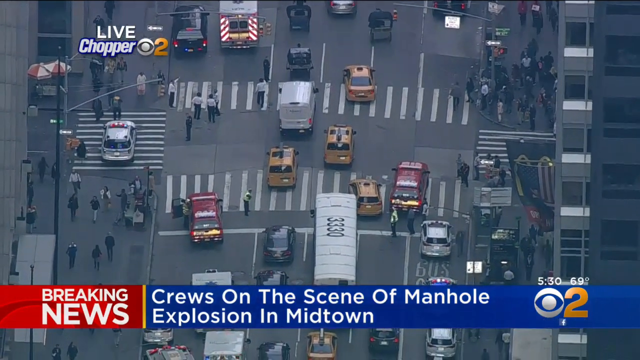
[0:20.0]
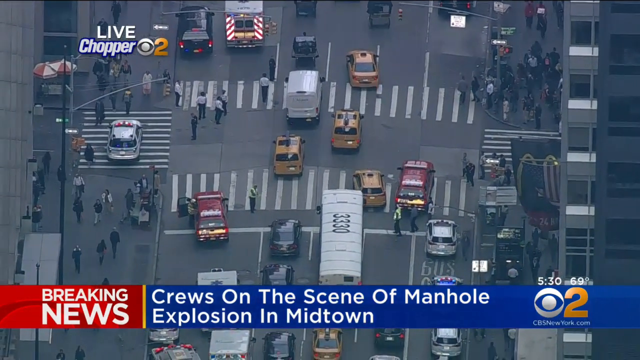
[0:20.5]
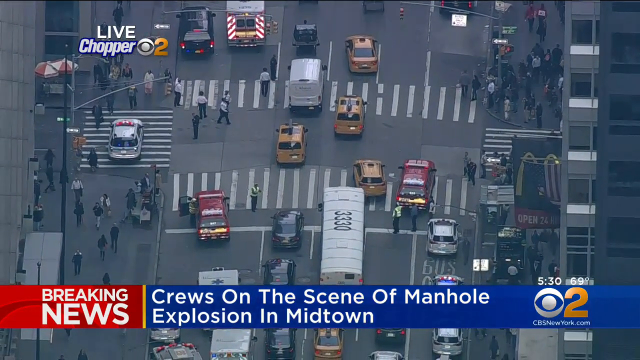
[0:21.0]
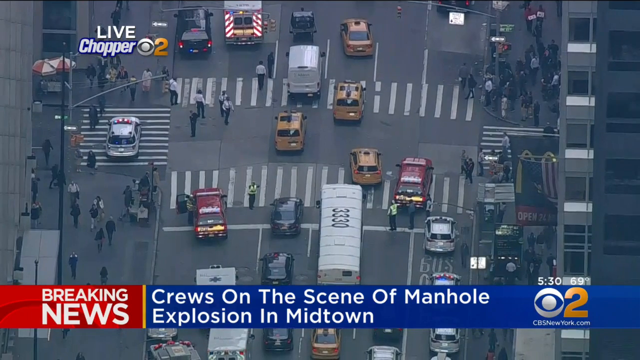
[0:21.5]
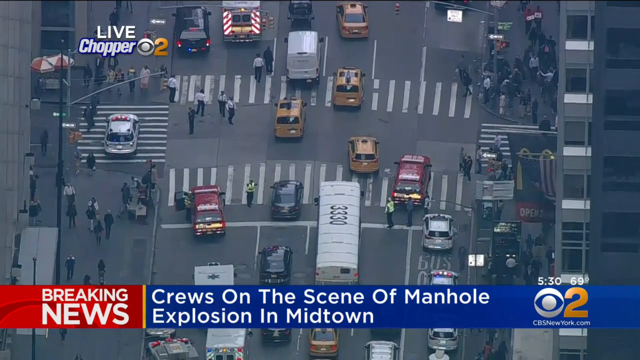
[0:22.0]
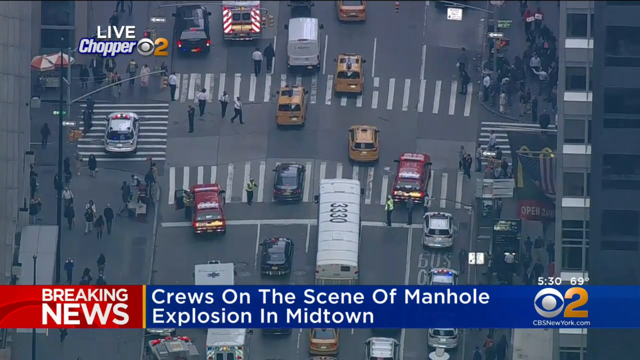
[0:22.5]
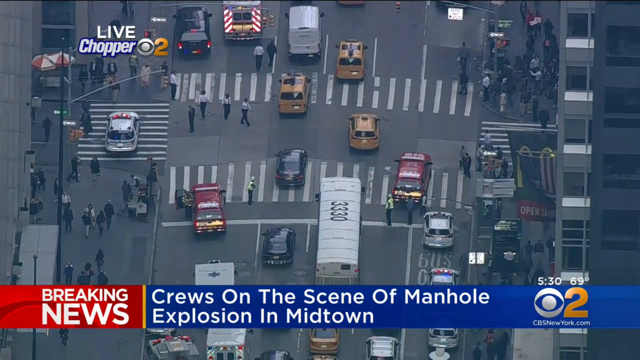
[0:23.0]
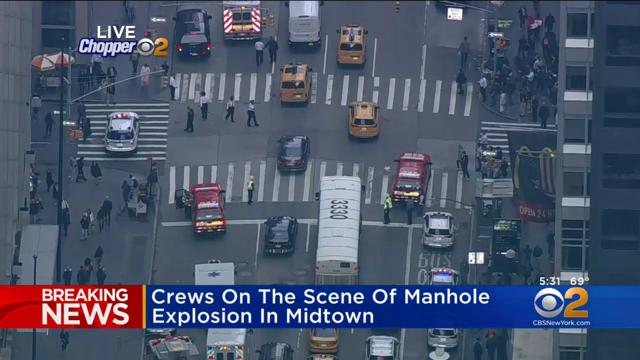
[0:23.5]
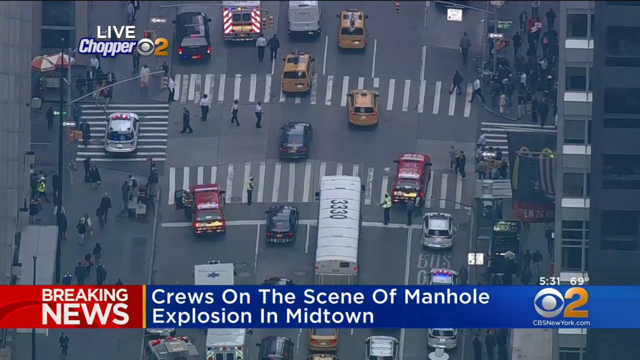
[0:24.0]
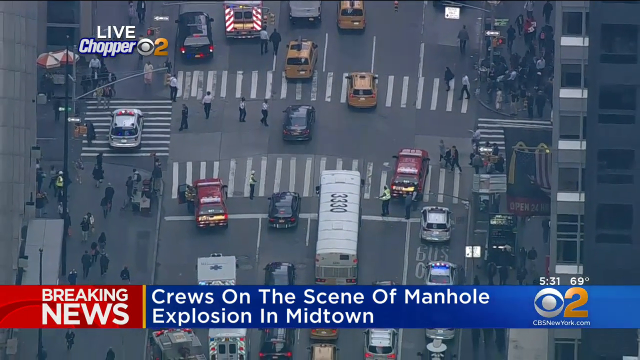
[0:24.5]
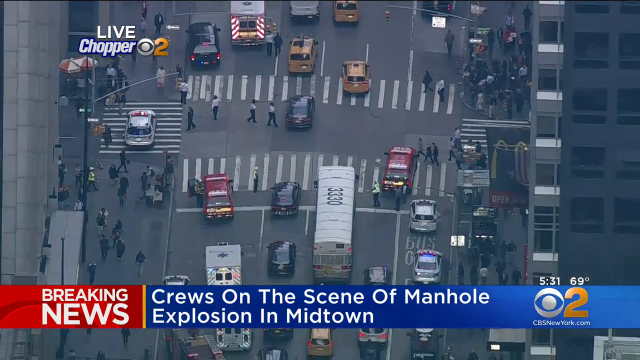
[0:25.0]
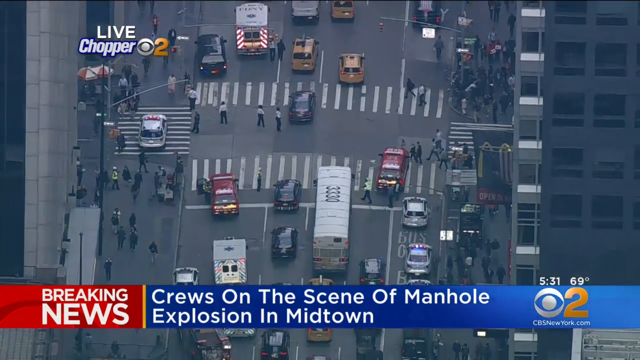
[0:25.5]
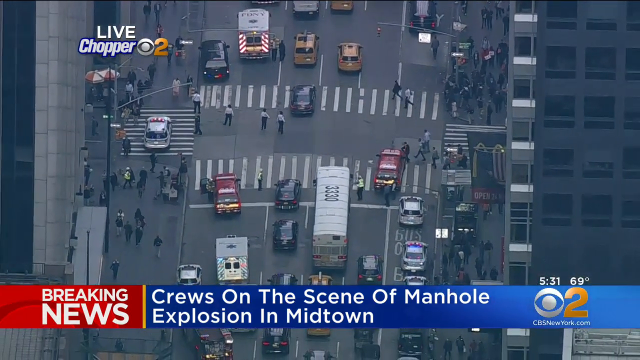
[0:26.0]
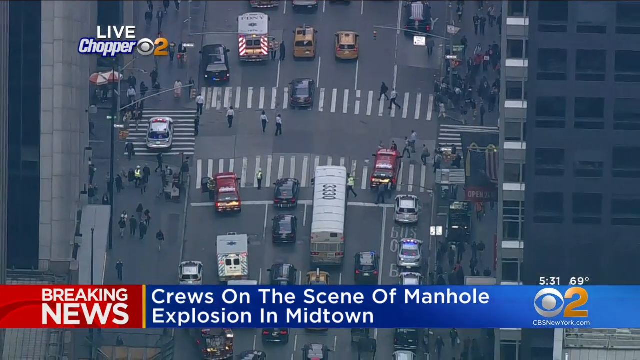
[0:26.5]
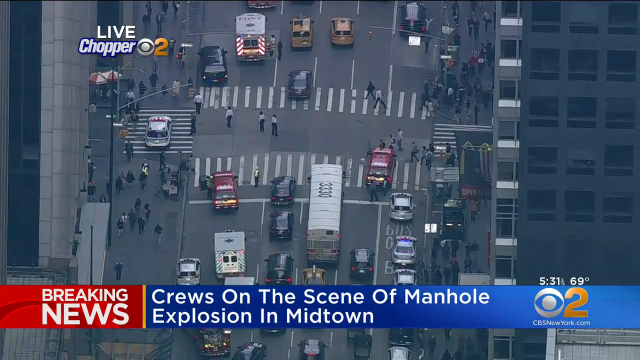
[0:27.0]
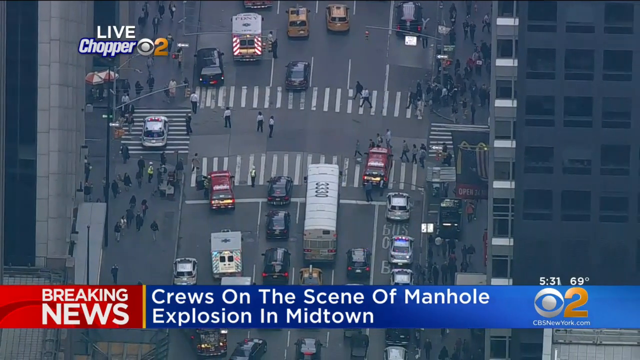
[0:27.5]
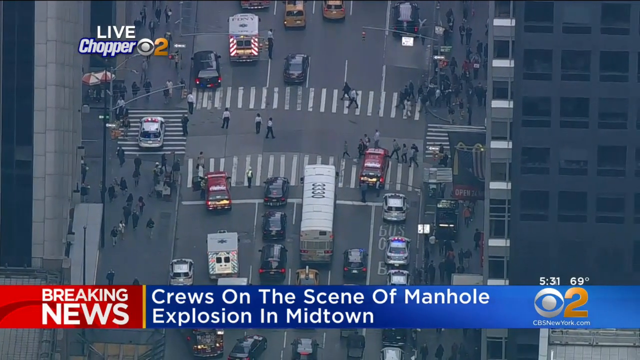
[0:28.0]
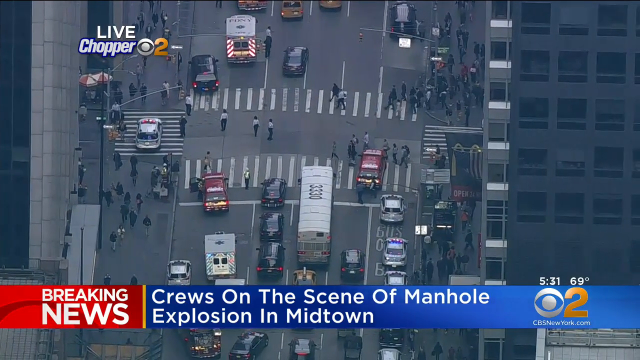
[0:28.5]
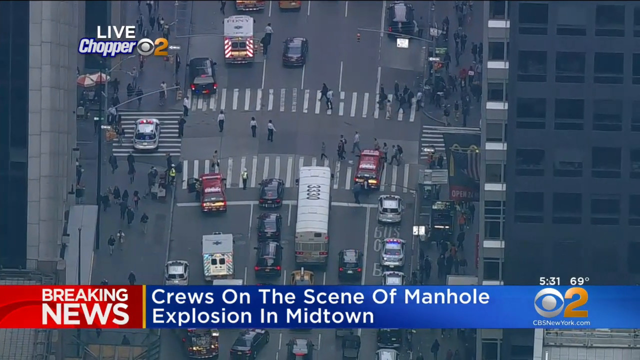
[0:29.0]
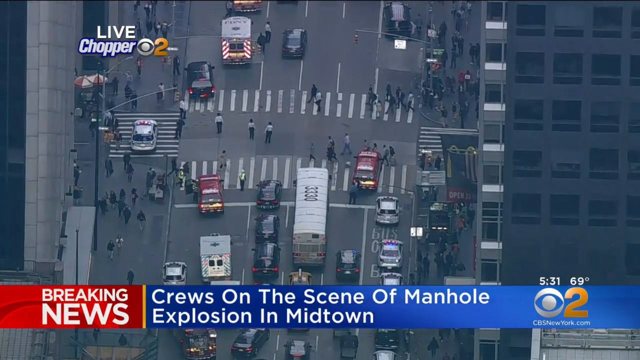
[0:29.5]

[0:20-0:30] Footage shows a busy street in Midtown, New York City, where cars try to pass by as many police officers and emergency first responders try to control the traffic and the pedestrians crossing the street from each side. Many yellow taxis, a large white bus, and many cars drive slowly through the street as the responders help control traffic. It appears to be the site of a major accident; the cars drive cautiously and slowly, and pedestrians on each side cross the crosswalk. The blue and red banner at the bottom of the screen still reads "BREAKING NEWS CREWS ON THE SCENE OF MANHOLE EXPLOSION IN MIDTOWN" with a CBS 2 New York logo.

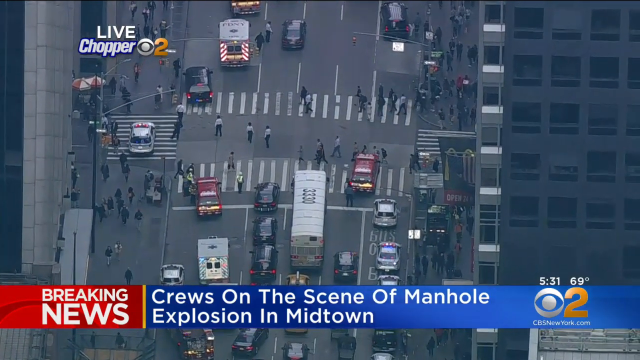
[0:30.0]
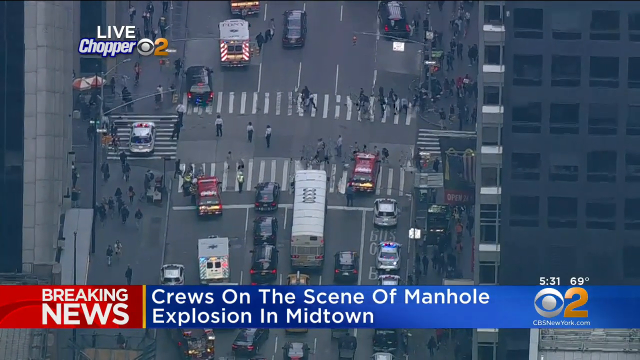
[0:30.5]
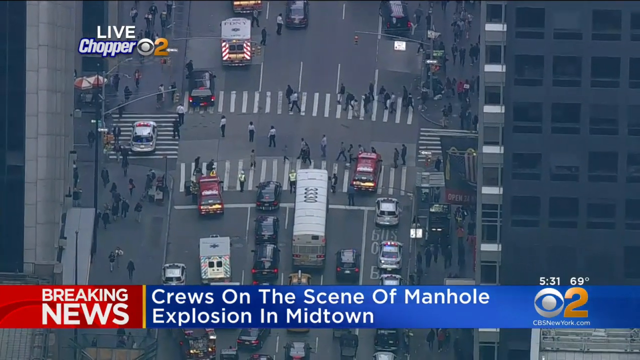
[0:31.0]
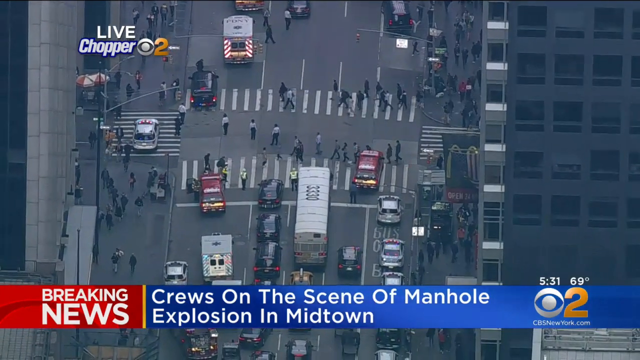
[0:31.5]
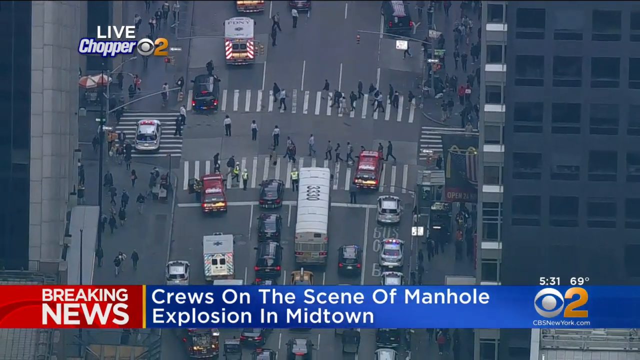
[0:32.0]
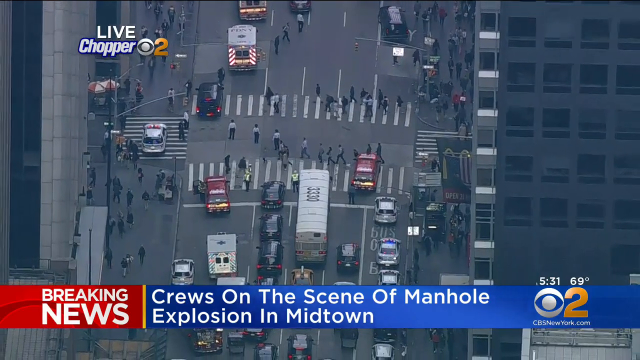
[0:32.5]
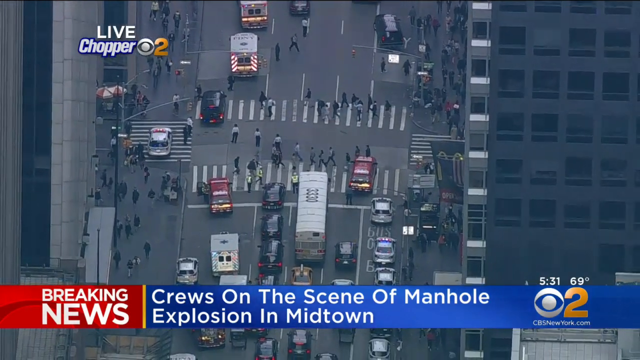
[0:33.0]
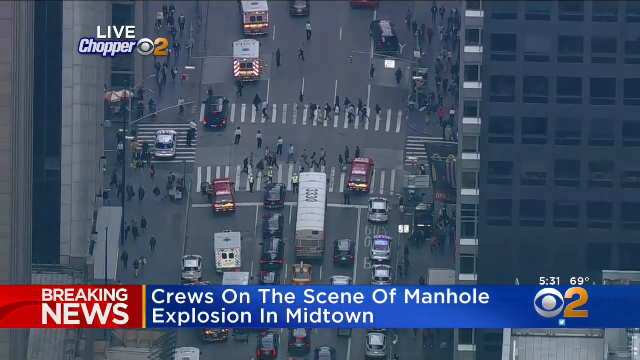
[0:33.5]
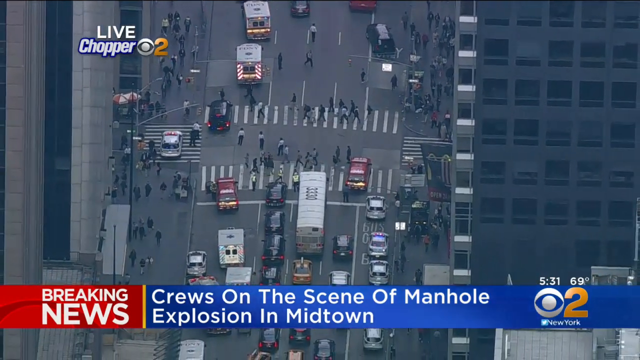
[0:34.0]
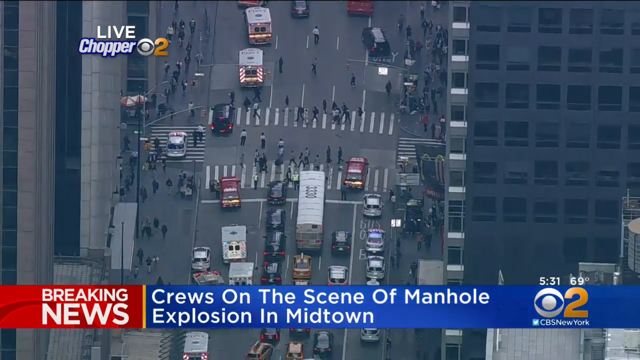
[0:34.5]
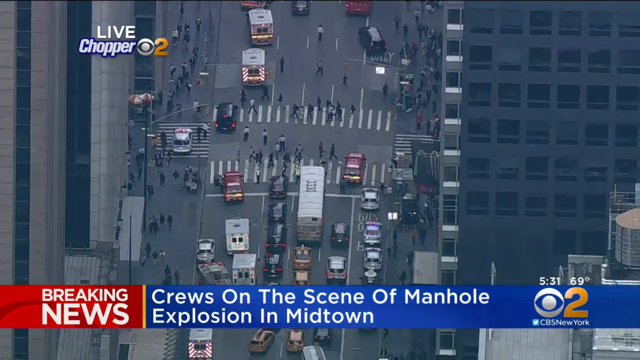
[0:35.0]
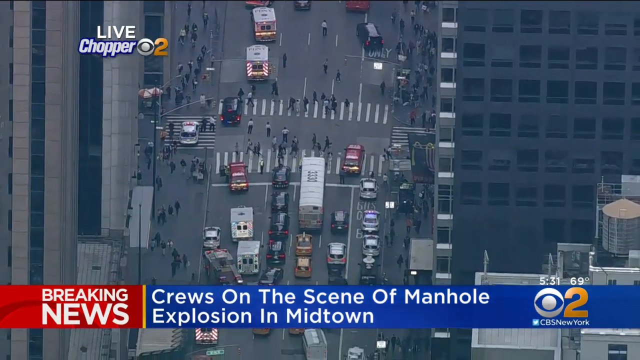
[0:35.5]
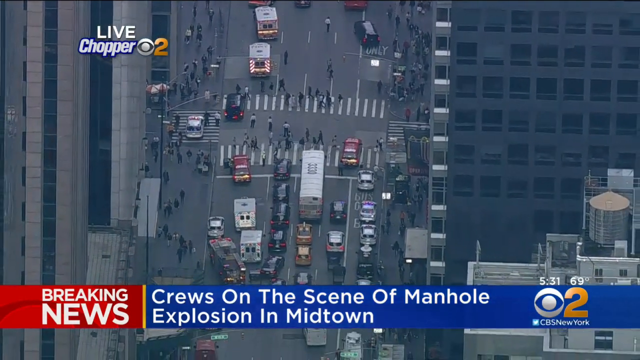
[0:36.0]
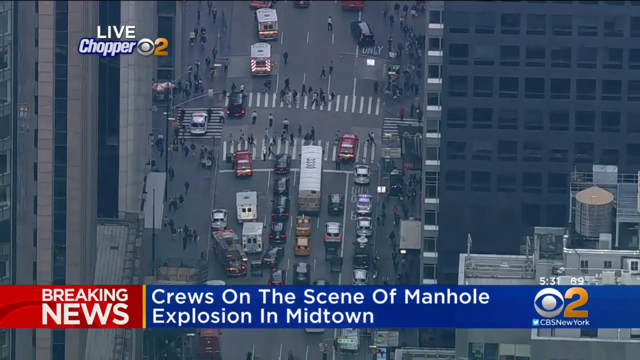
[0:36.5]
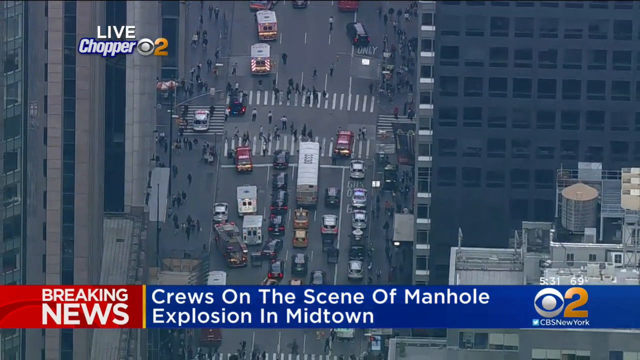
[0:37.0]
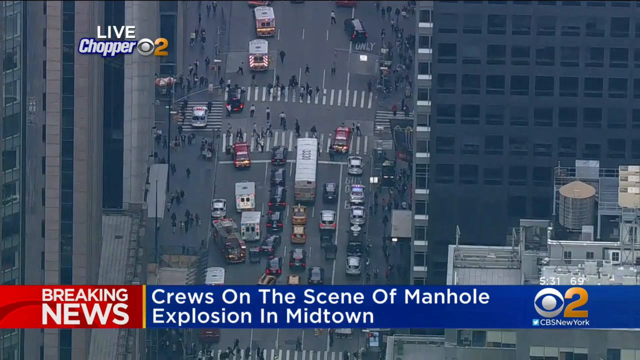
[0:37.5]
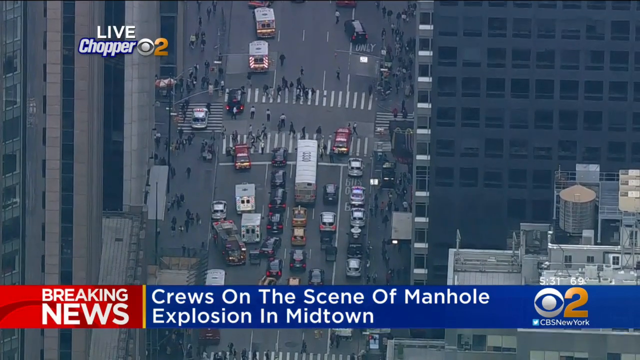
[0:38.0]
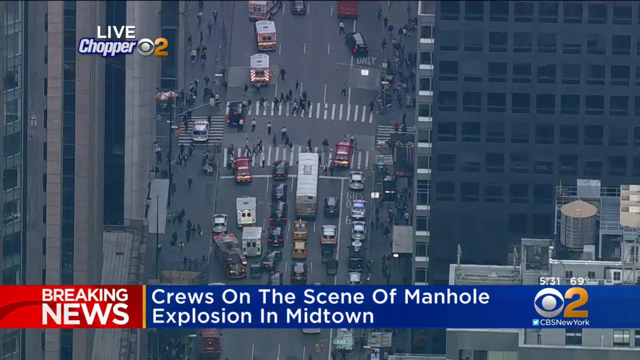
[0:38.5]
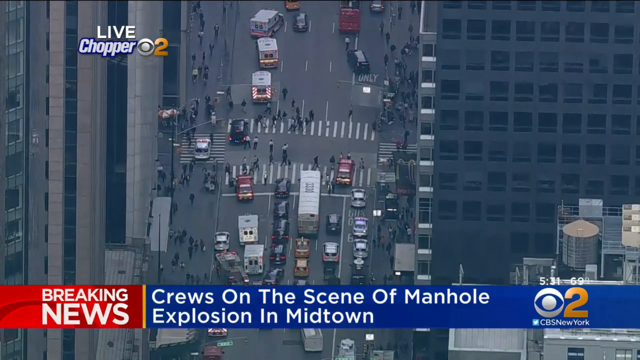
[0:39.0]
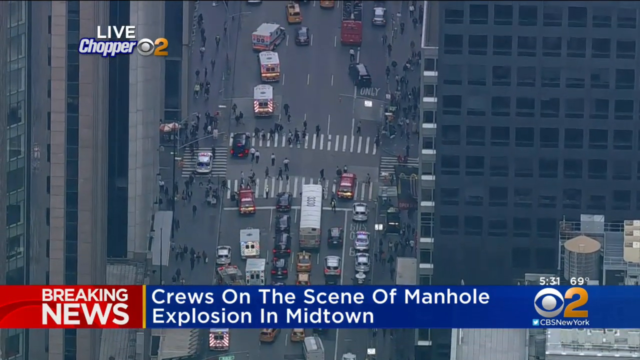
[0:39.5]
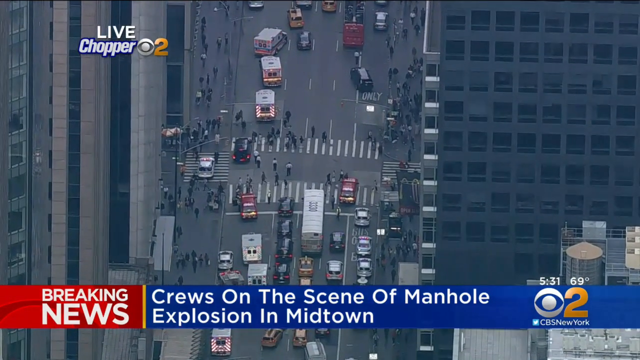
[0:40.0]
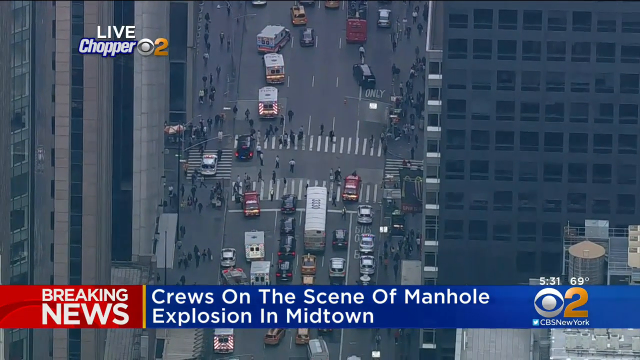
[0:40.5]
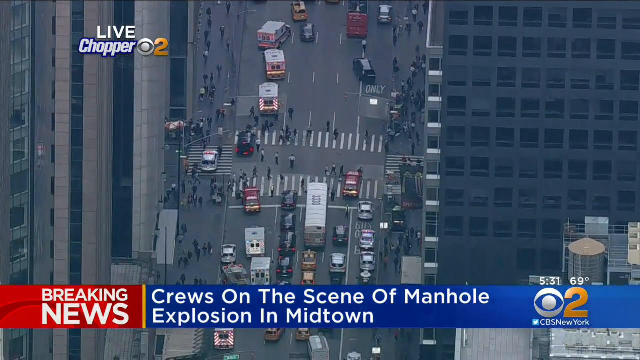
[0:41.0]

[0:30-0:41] The busy Midtown New York City street is shown in the aftermath of an accident, with emergency vehicles parked along the sides of the street. The street is framed vertically, with cars at the bottom of the screen trying to drive up the street. Wide sidewalks flank both sides of the street, and two horizontal crosswalks are in the middle of it. Pedestrians on each side cross the crosswalks while the cars drive cautiously and slowly through the accident scene. Large, tall buildings surround the street.